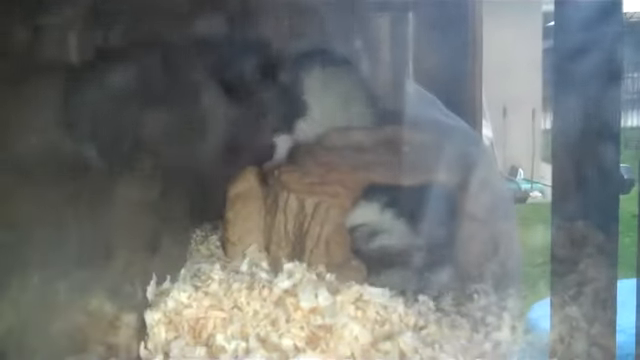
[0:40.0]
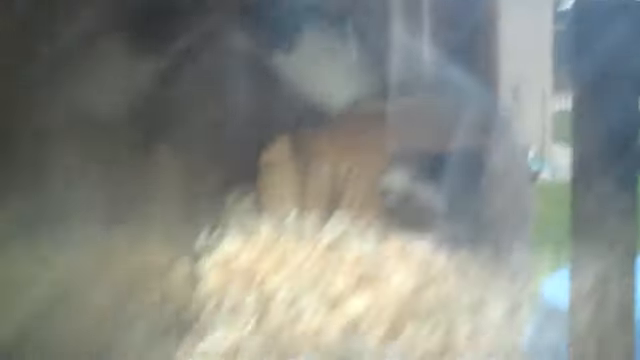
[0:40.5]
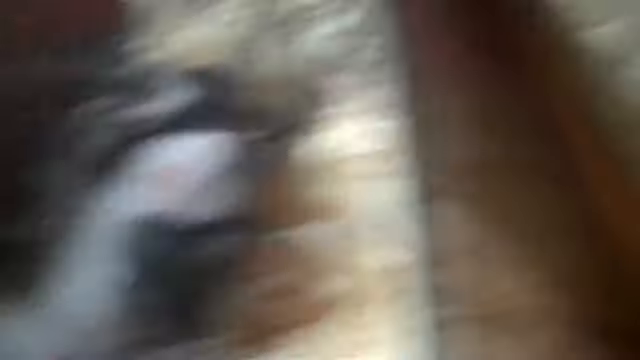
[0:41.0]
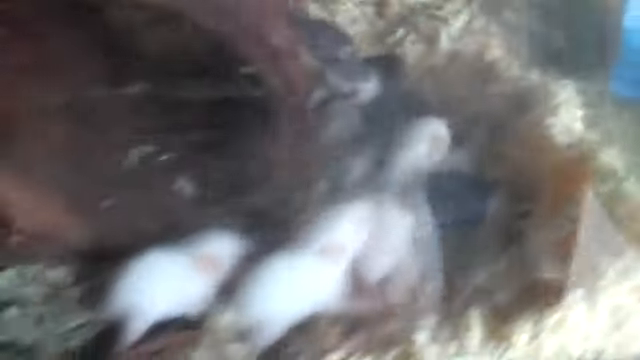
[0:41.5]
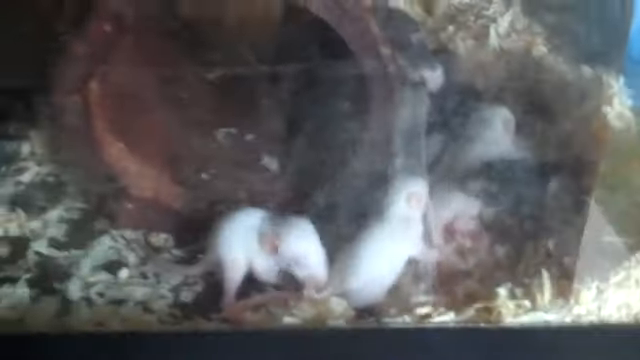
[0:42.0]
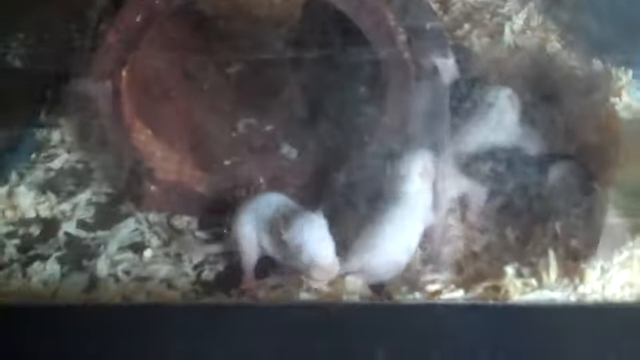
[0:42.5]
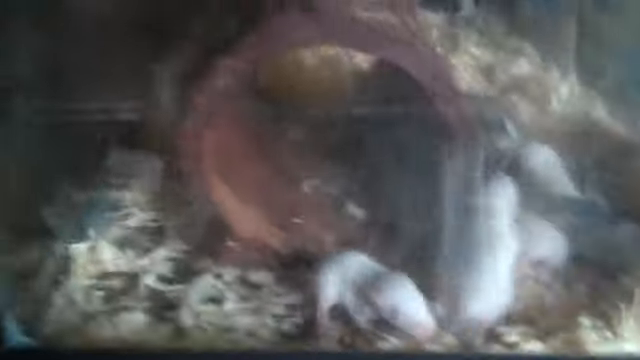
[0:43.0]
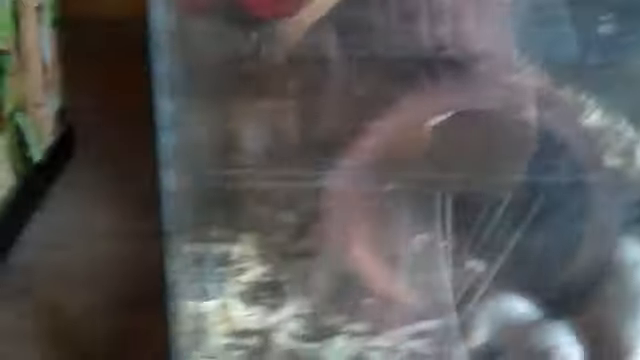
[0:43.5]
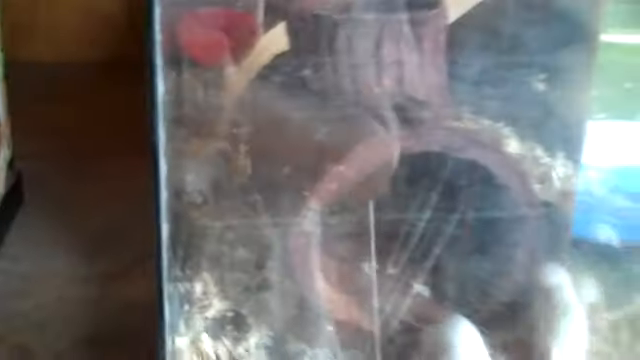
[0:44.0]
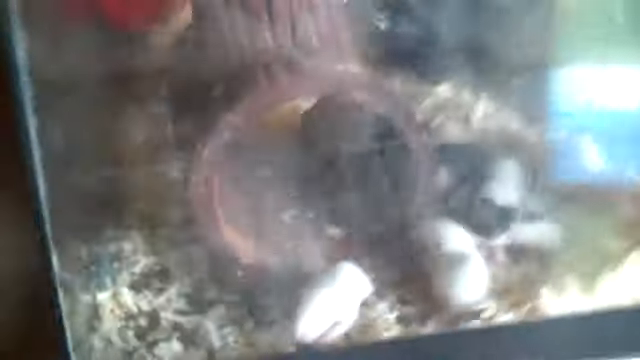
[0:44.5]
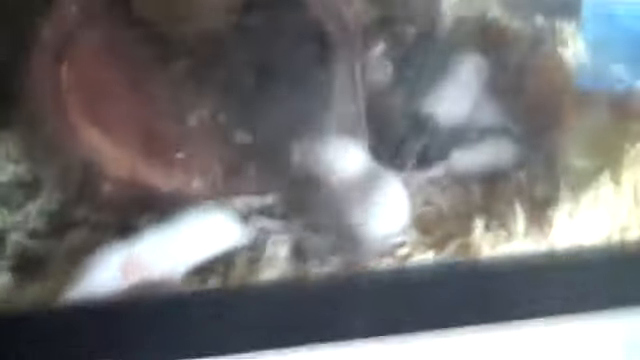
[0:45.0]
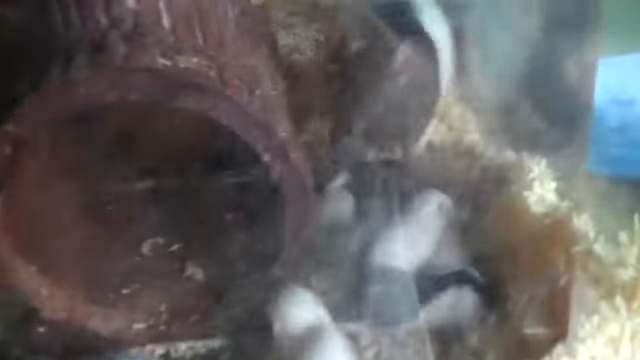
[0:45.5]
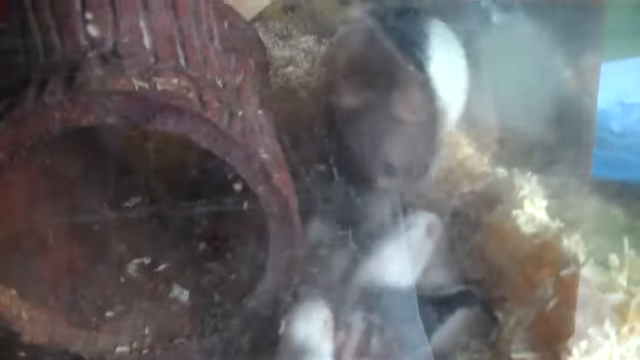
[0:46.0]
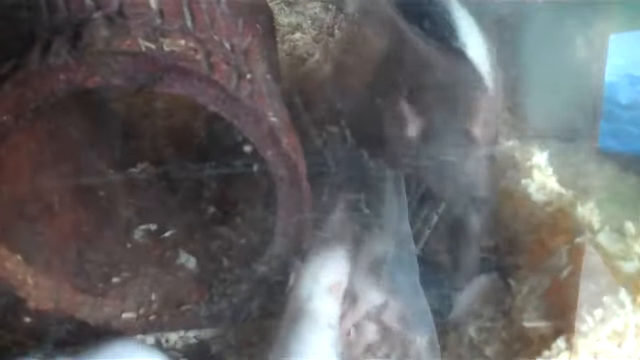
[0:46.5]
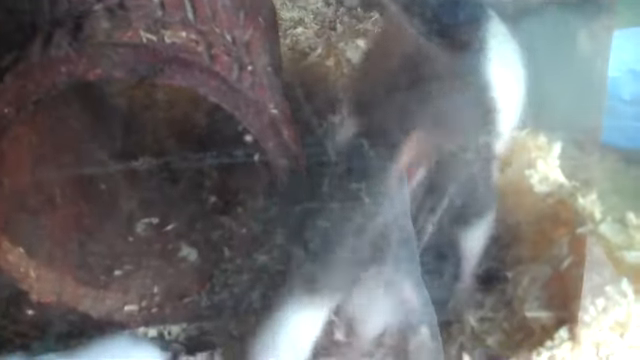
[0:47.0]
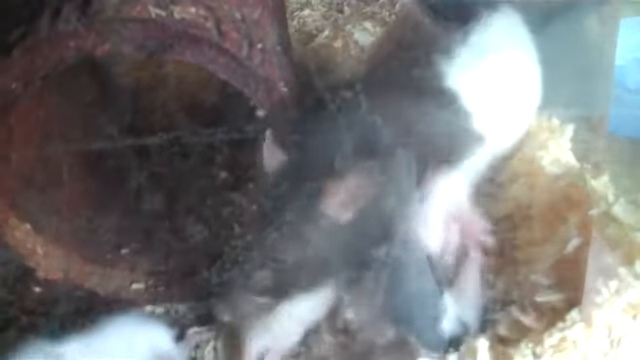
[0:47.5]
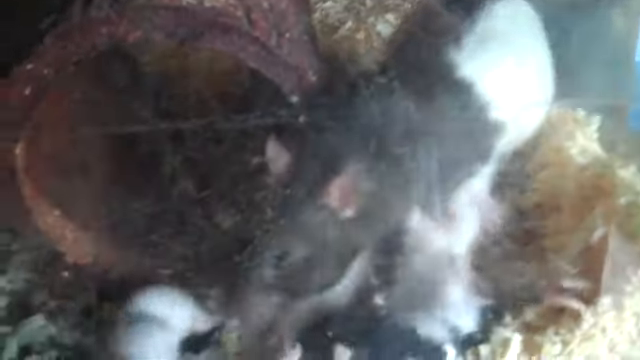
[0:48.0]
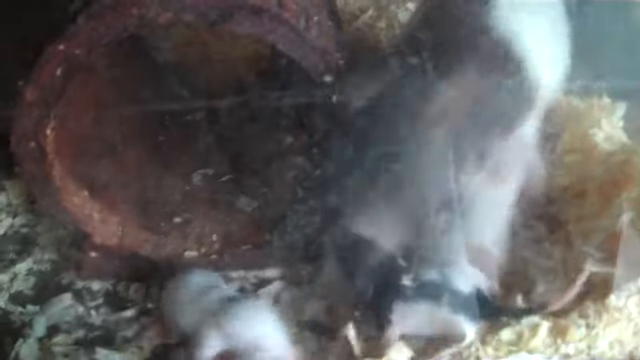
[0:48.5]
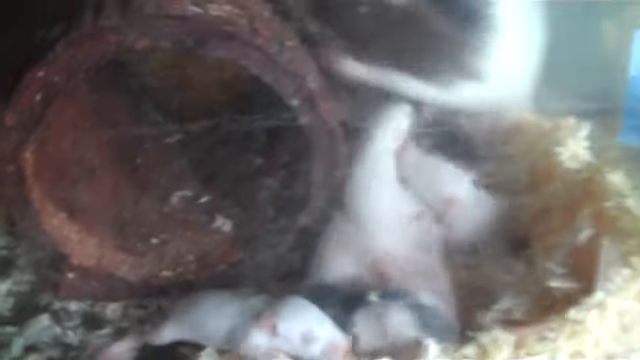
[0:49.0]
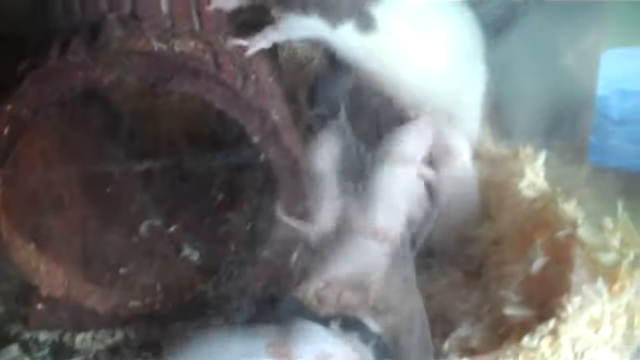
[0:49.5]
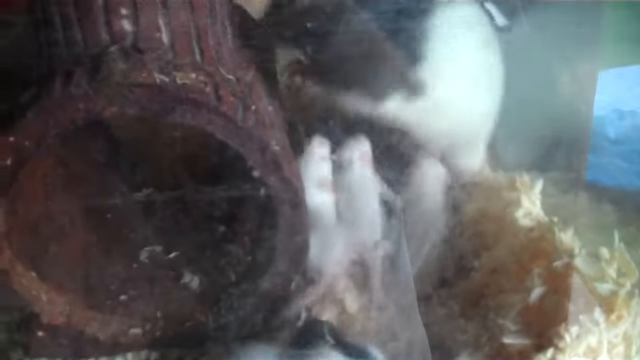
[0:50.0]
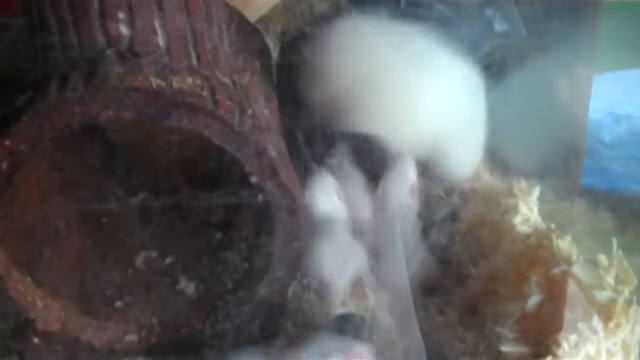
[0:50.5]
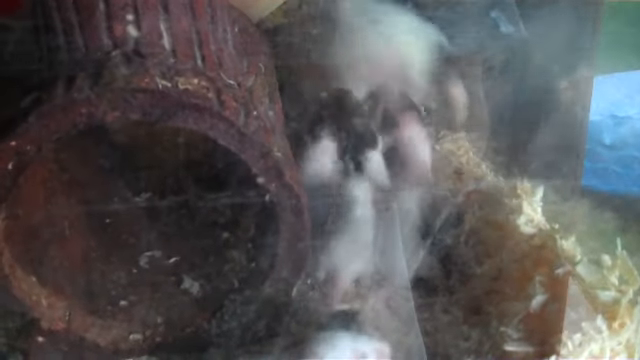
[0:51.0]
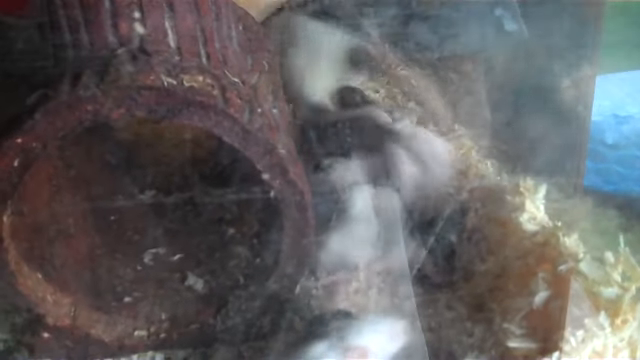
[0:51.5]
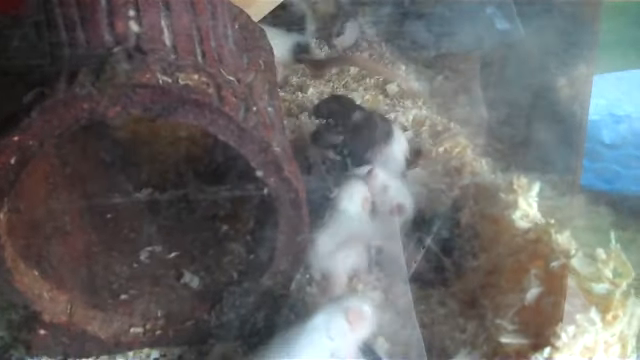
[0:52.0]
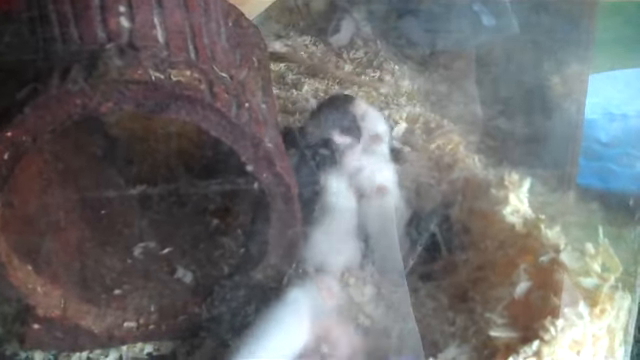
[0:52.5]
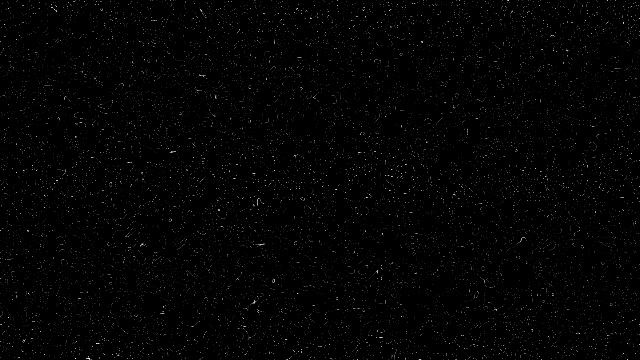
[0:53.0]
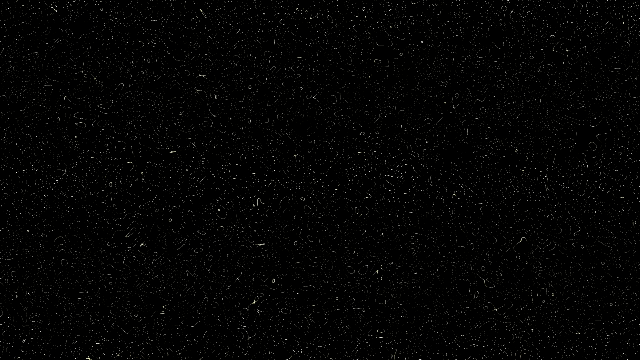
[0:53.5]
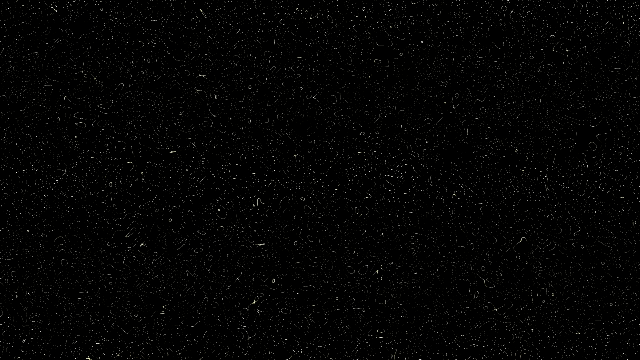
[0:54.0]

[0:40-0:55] A big mouse and its little ones are inside an enclosure, and the mother is now present; she is big. The young are probably looking for their mother. Some are pure white, while others are black over half of their body, with the black part running along their back. The camera moves around to show that they are in a glass cage, with what looks like a brown round brick or a carved brown tree inside. The mother stays inside another hole there, comes out to check on them, seems to try to mount the brown tree, and then runs back.